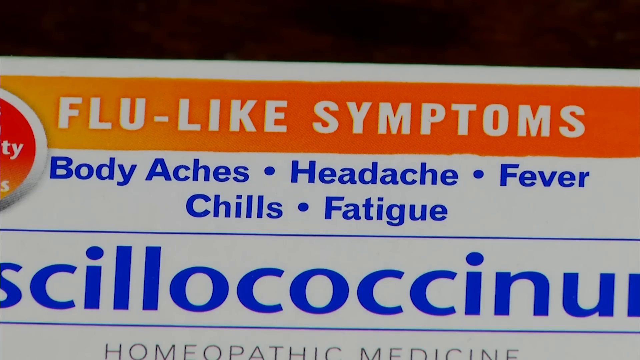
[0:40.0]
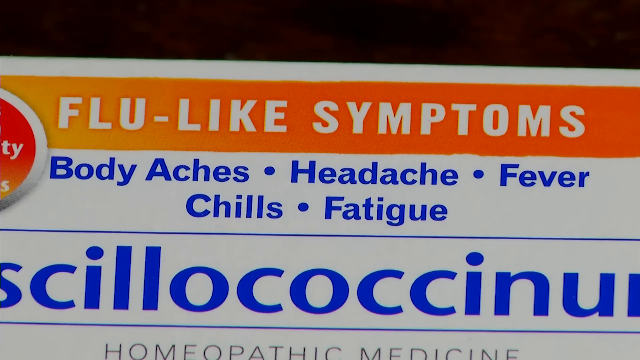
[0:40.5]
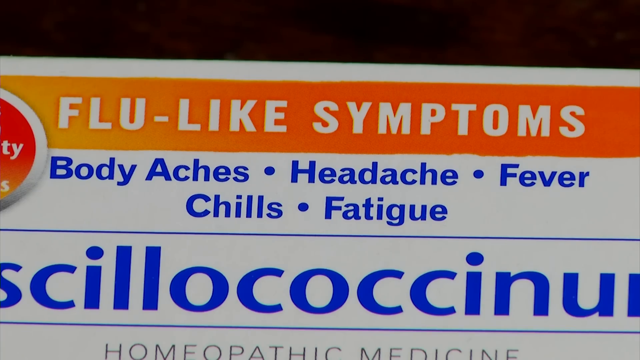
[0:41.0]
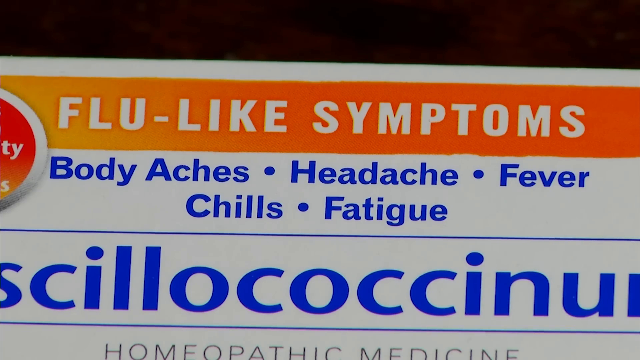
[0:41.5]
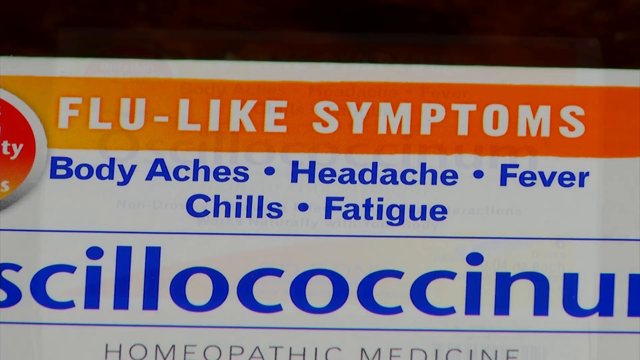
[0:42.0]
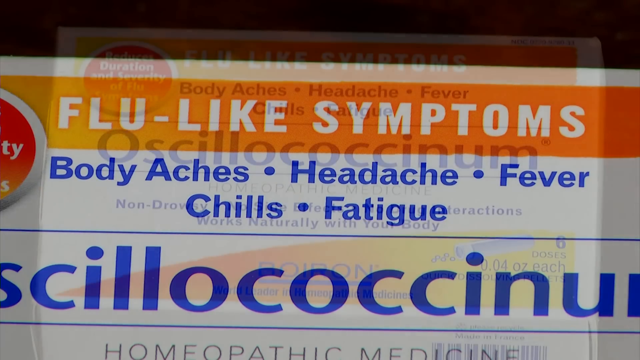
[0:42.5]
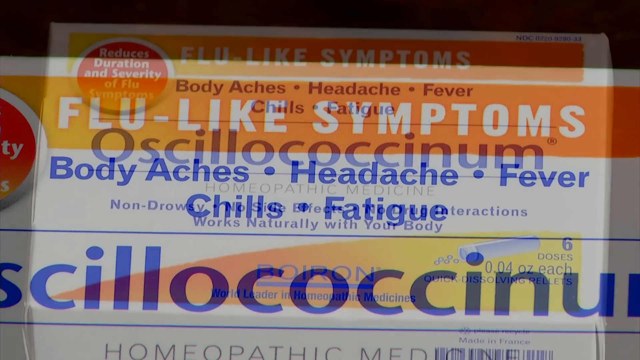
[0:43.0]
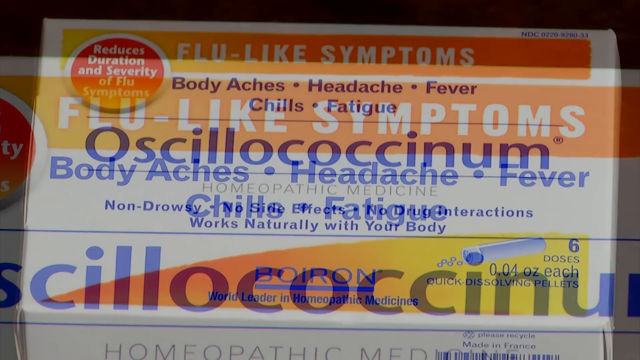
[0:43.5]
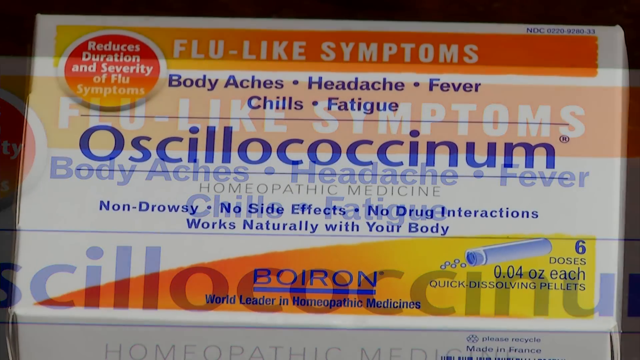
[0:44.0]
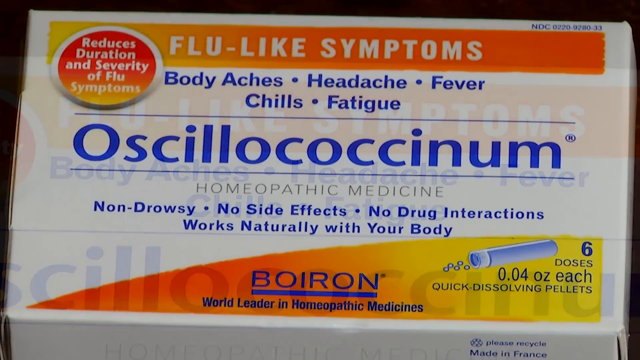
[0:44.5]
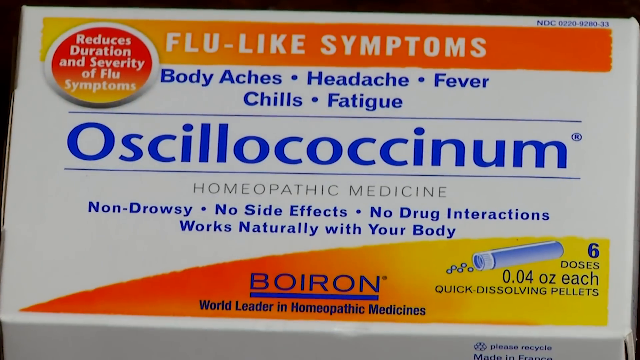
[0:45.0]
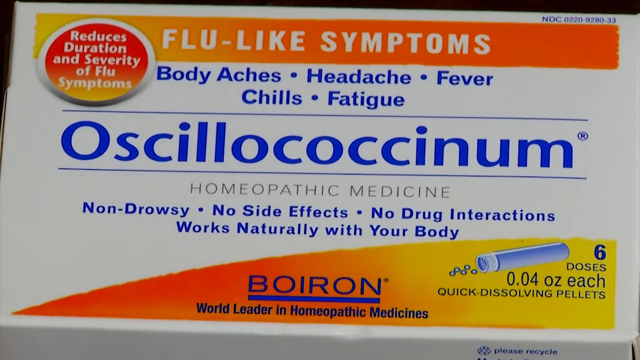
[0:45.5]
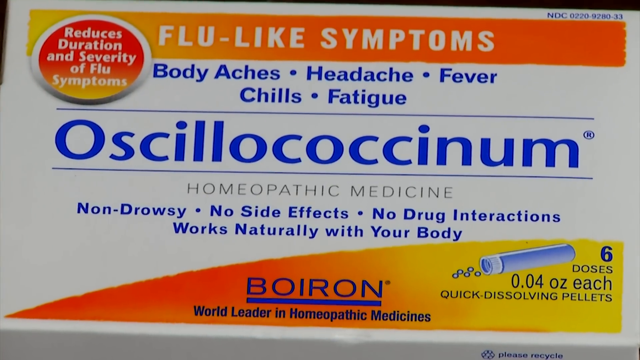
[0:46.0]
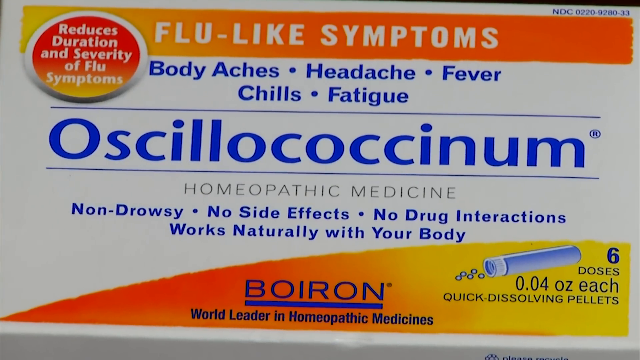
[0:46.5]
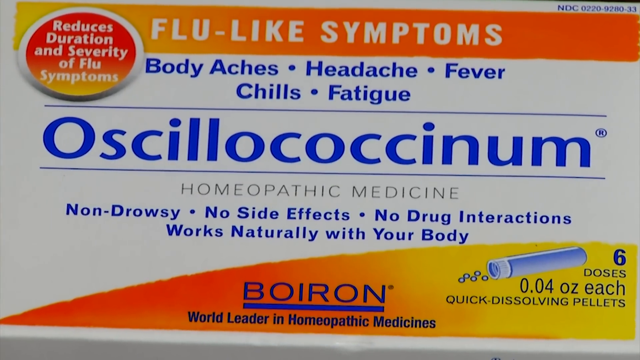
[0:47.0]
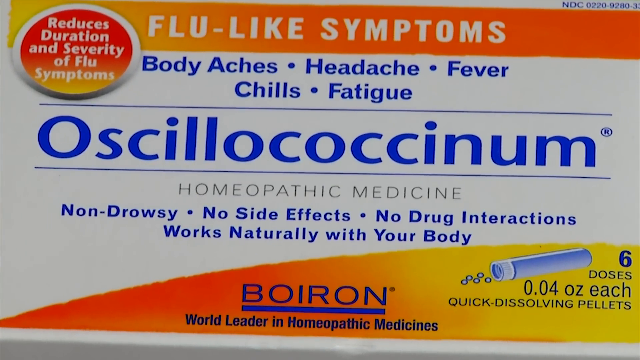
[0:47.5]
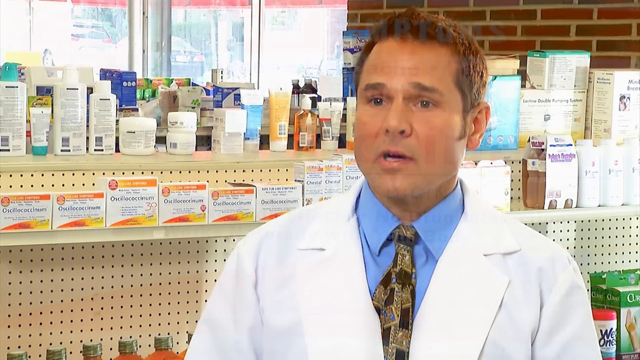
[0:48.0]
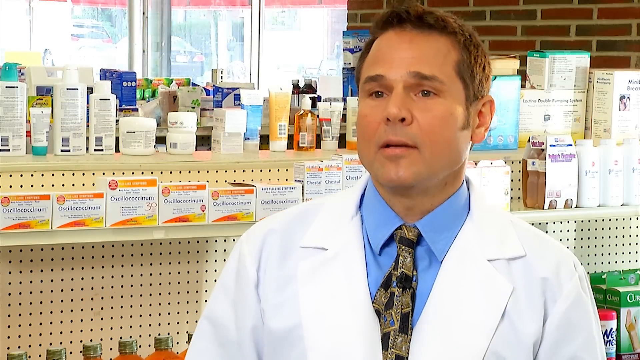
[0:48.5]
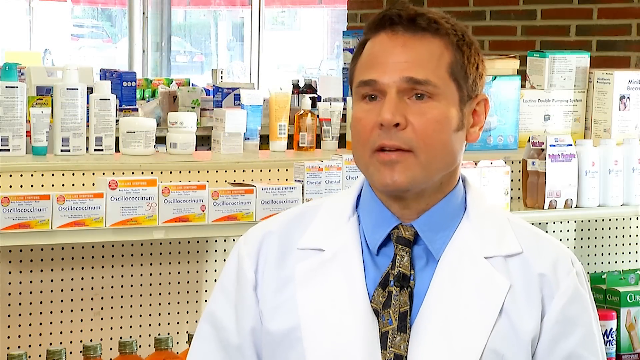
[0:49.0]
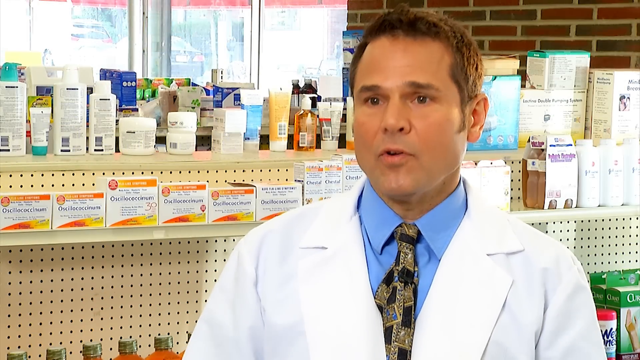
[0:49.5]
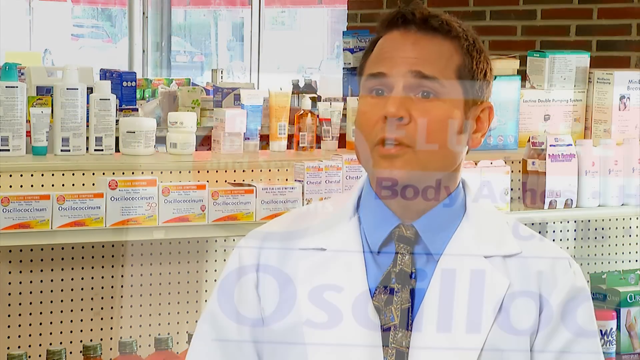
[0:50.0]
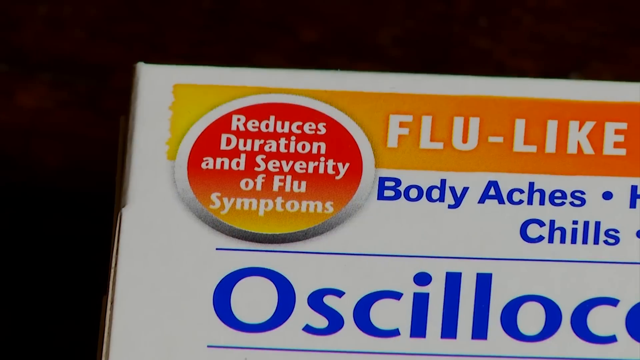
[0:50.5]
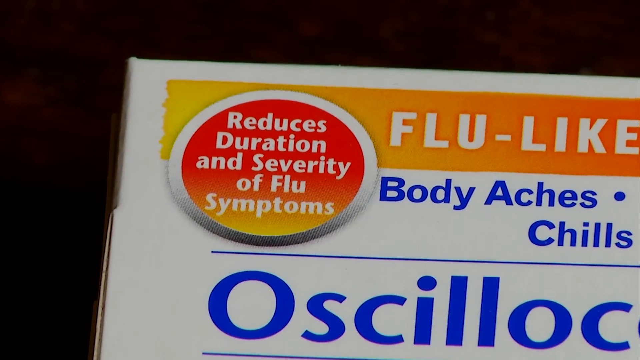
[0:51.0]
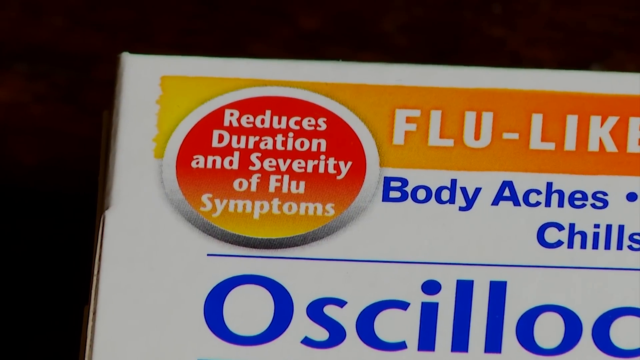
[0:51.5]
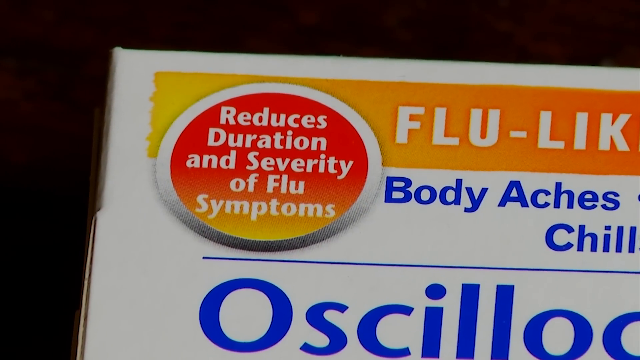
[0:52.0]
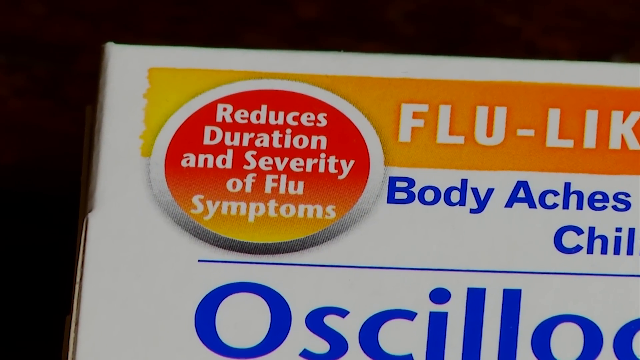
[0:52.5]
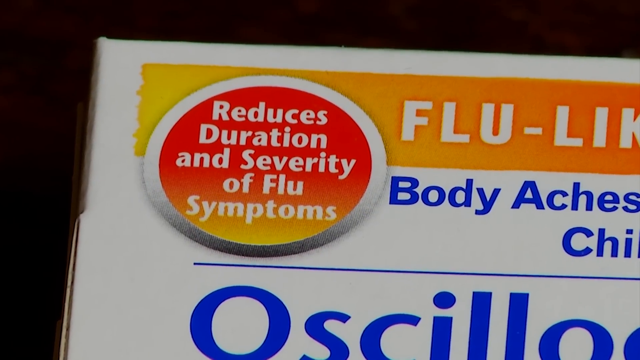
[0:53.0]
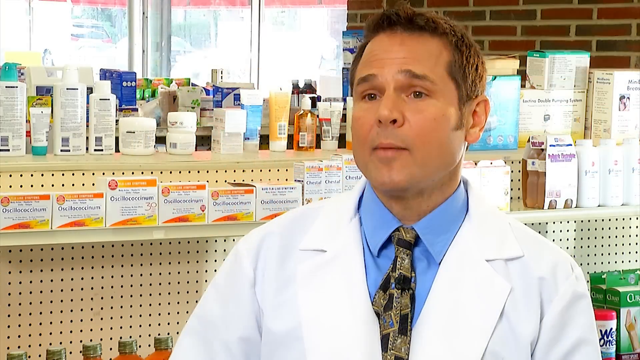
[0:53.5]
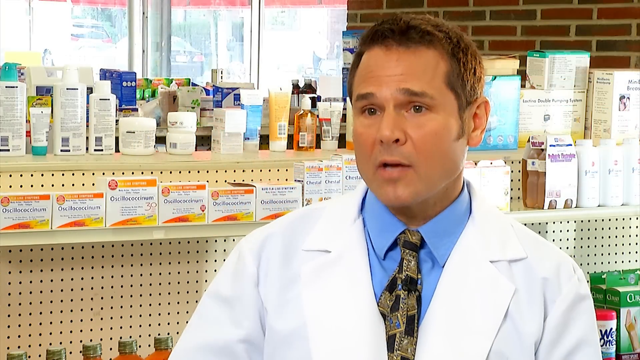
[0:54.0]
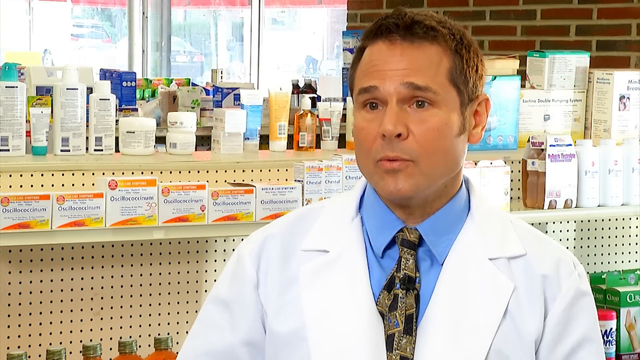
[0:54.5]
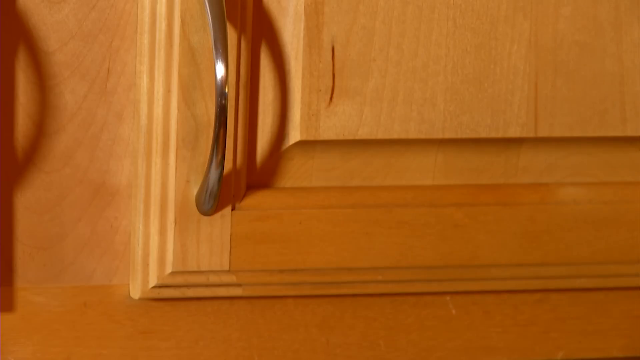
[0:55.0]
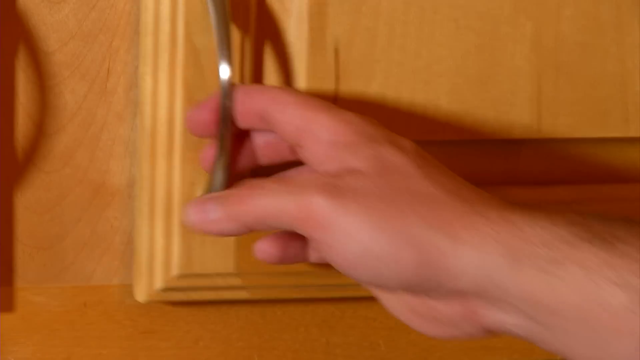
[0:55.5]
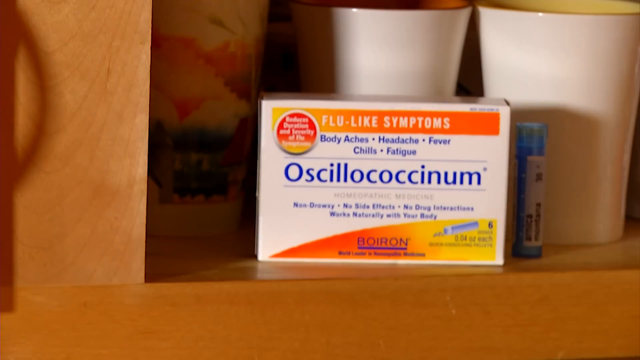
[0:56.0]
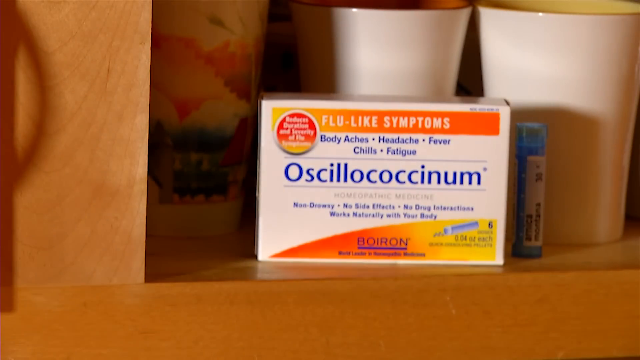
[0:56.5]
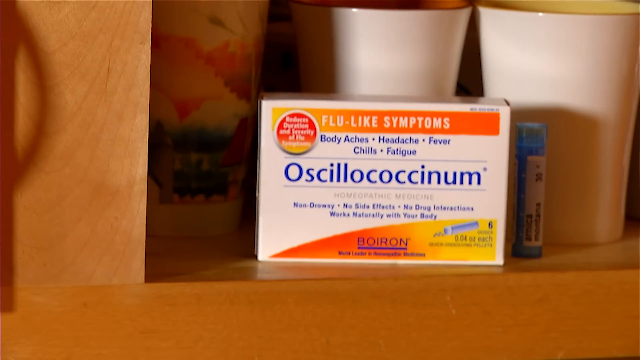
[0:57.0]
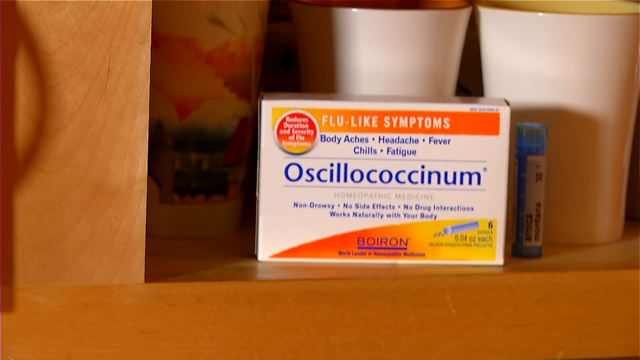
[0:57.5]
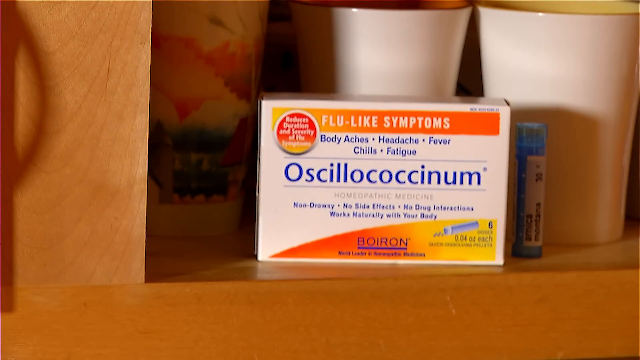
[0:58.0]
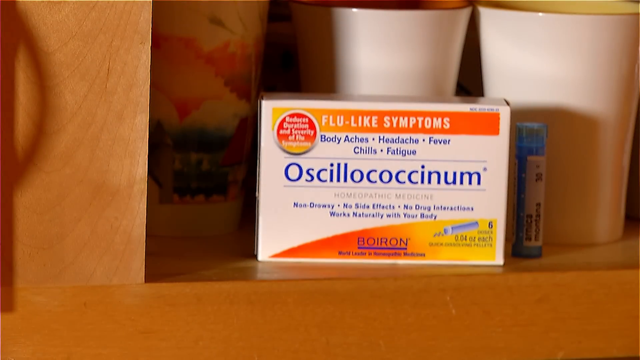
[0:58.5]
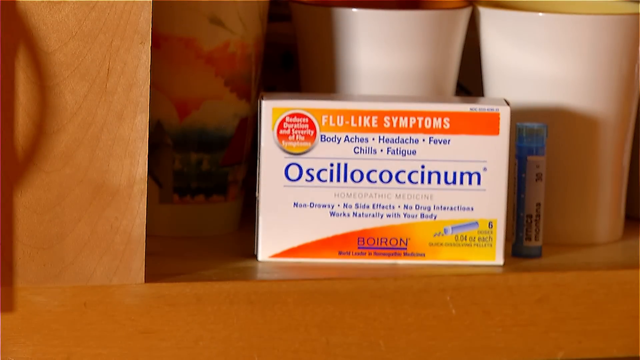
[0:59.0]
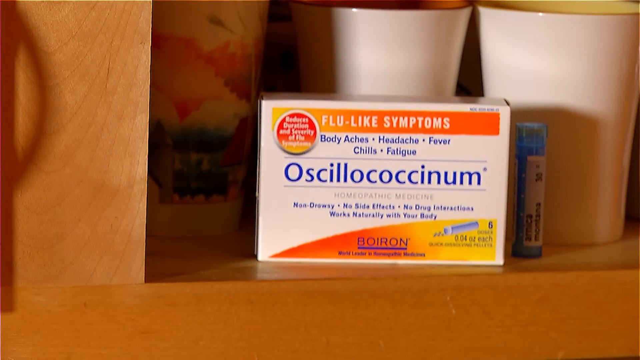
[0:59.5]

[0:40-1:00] Most of the text on the packet is blue on a white background. Across the top, white text on an orange background reads "flu-like symptoms". Below that, in blue text on white, is a series of symptoms including body aches, headache, fever, chills and fatigue. The image then fades to another image of the medication packet, for Oscillococcinum, which is described as a homeopathic medicine that is non-drowsy, has no side effects, no drug interactions, and works naturally with the body. At the top left is a circle with a red background and white text reading "reduces duration and severity of flu symptoms". At the bottom right, a message states that the packet contains six doses of 0.04 ounces each of quick dissolving pellets. The camera zooms in, then fades out to a man in a white lab coat with a blue shirt and a tie underneath, talking into the camera. The image changes to a close-up of the red circle on the packet stating that it reduces duration and severity of flu symptoms, and then returns to the man in the white lab coat and blue shirt talking into the camera. Next, a video shows a light brown wooden kitchen cabinet door with a metal handle; a right hand reaches toward the handle and opens the cupboard, revealing the medication packet inside in front of two cups.